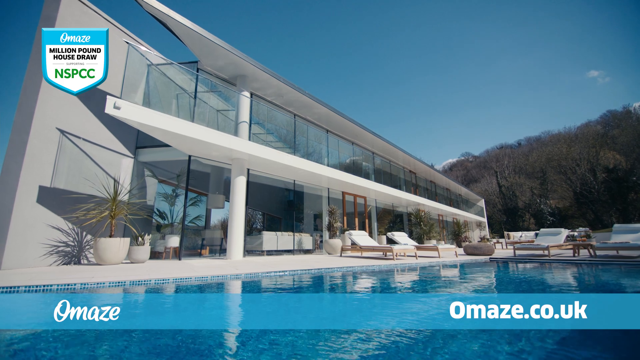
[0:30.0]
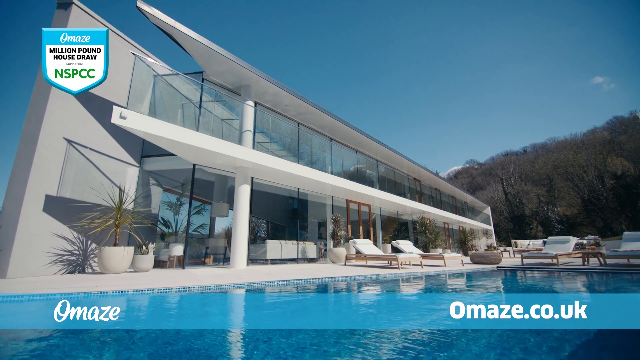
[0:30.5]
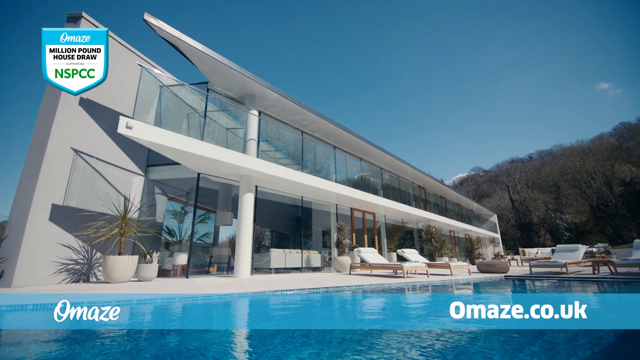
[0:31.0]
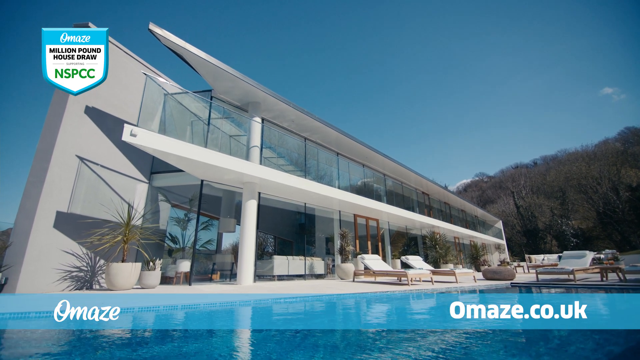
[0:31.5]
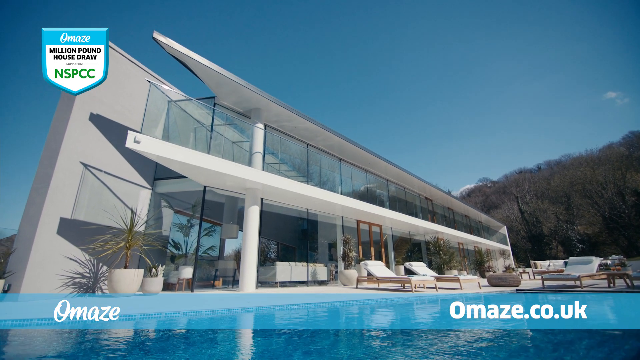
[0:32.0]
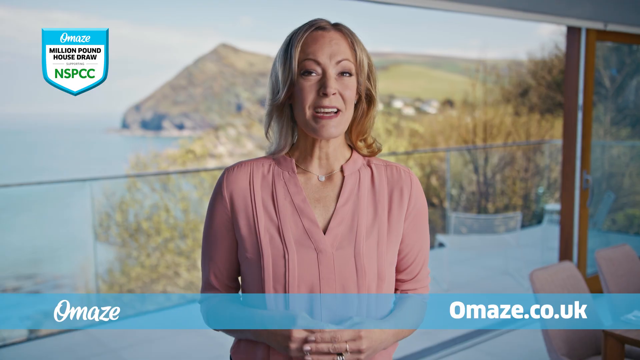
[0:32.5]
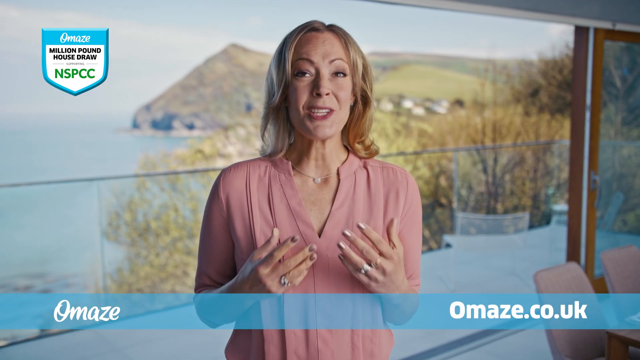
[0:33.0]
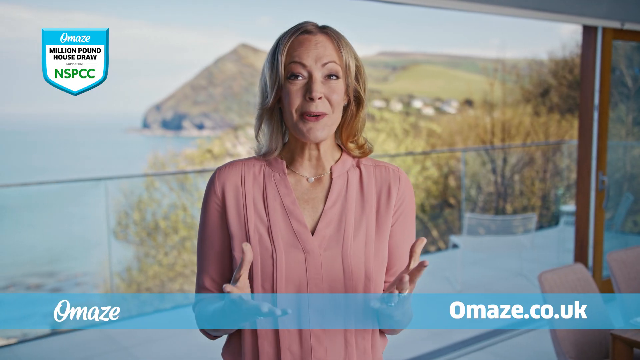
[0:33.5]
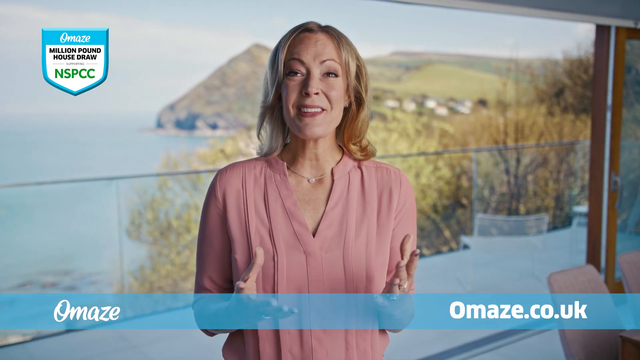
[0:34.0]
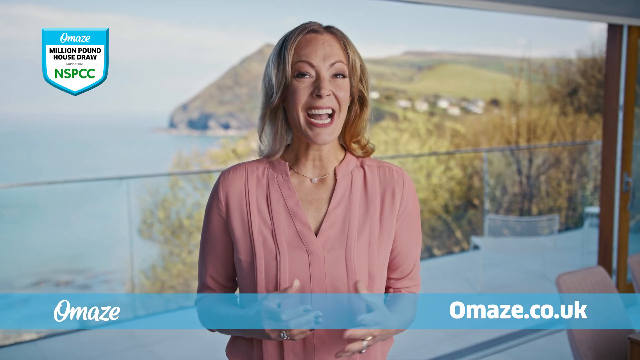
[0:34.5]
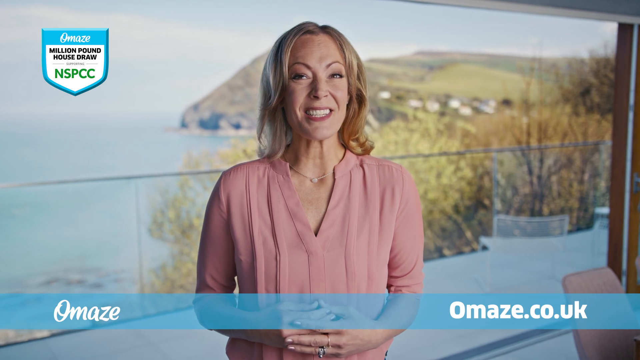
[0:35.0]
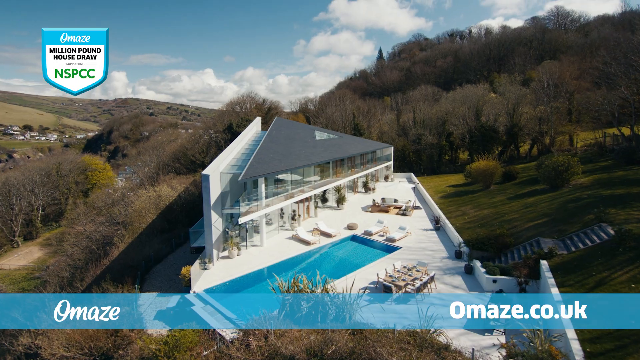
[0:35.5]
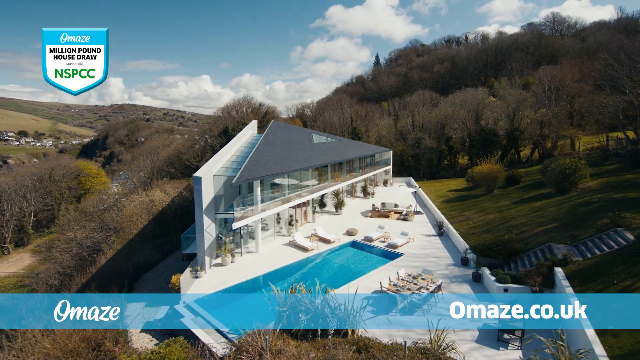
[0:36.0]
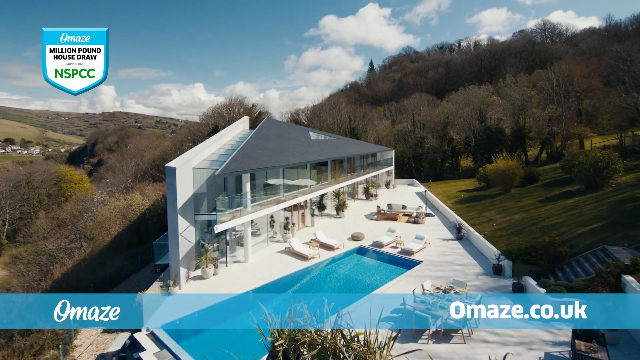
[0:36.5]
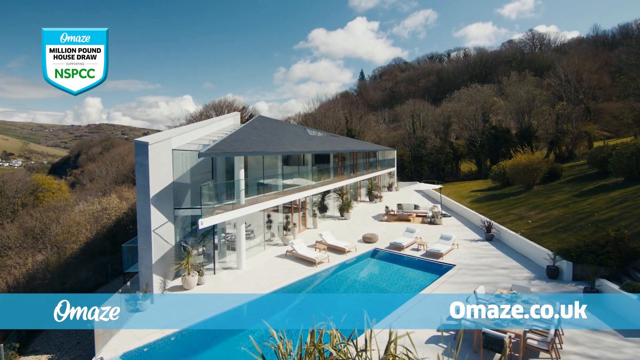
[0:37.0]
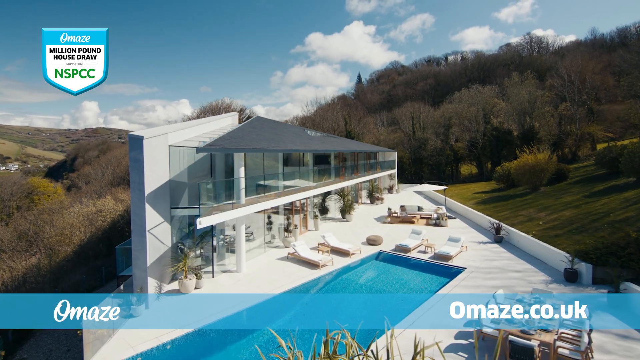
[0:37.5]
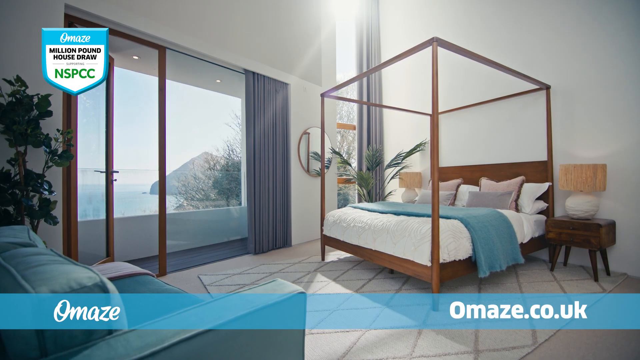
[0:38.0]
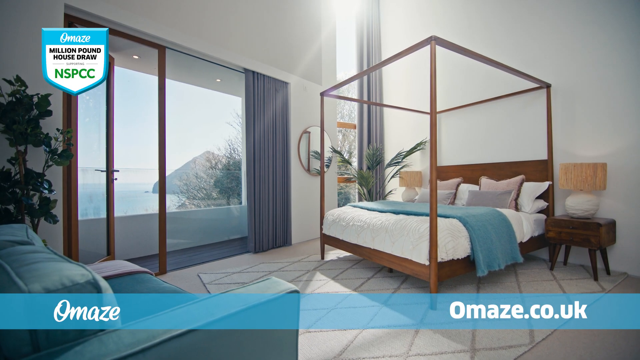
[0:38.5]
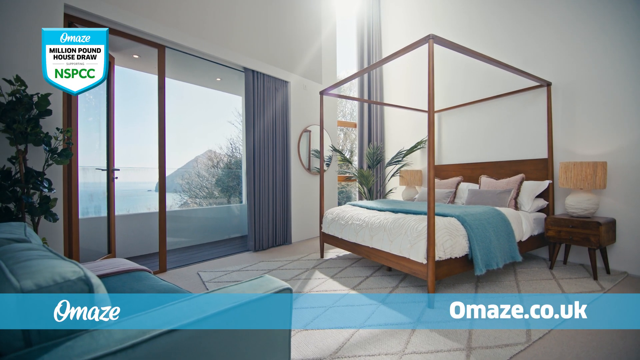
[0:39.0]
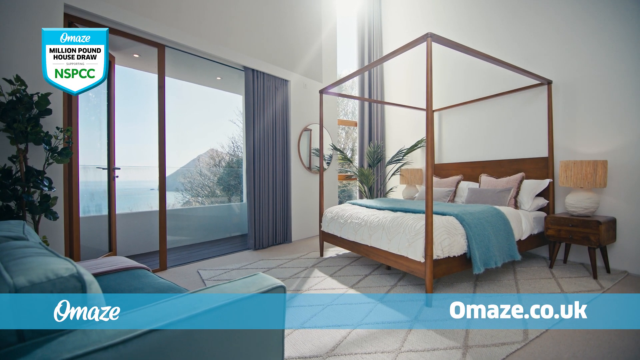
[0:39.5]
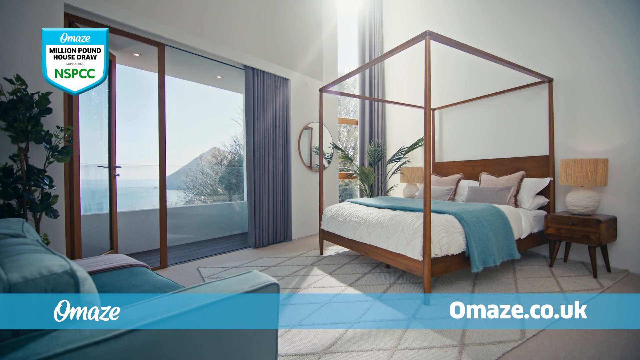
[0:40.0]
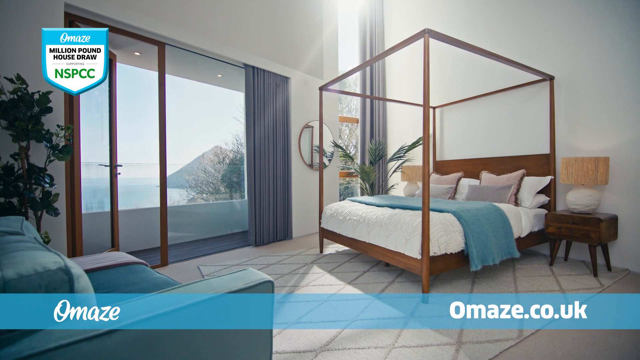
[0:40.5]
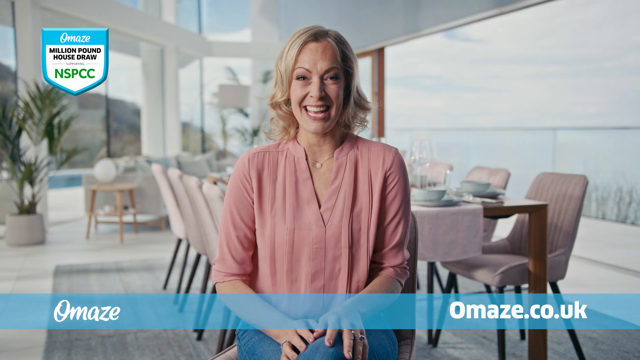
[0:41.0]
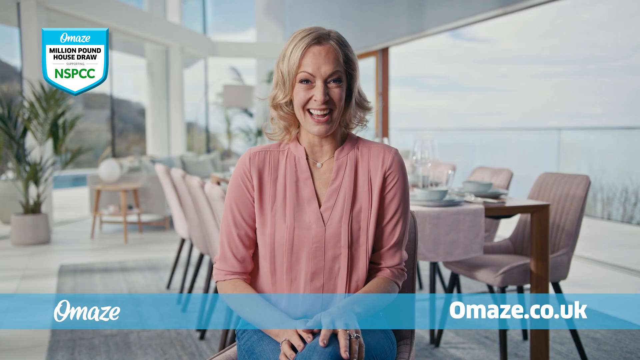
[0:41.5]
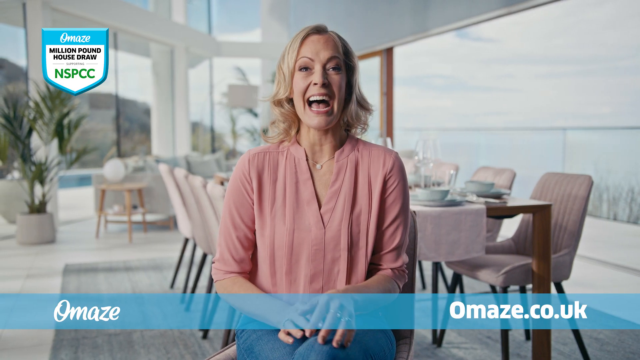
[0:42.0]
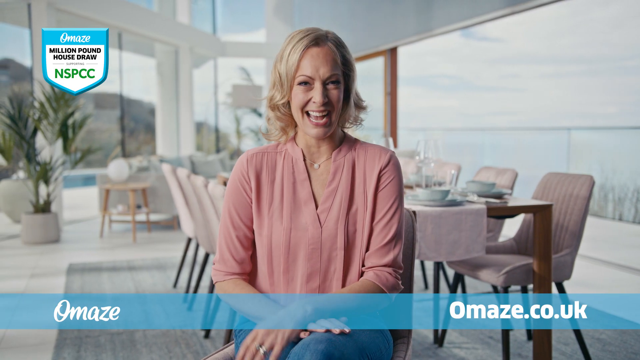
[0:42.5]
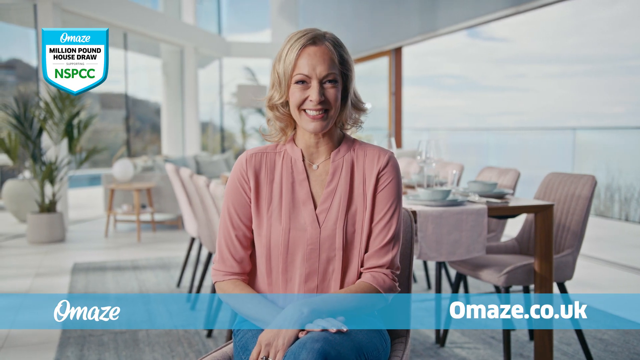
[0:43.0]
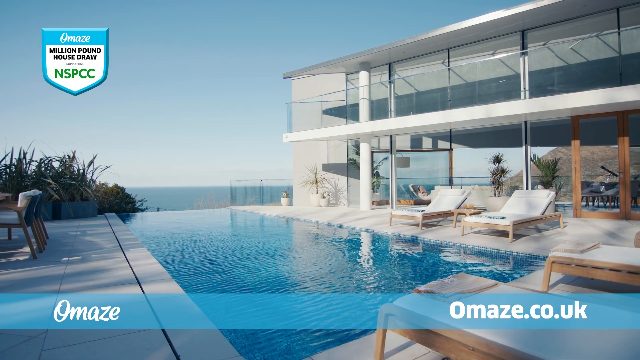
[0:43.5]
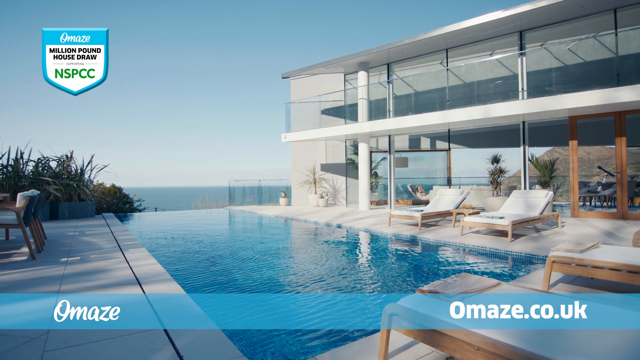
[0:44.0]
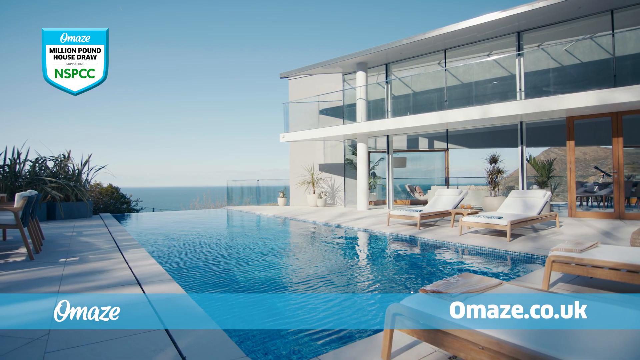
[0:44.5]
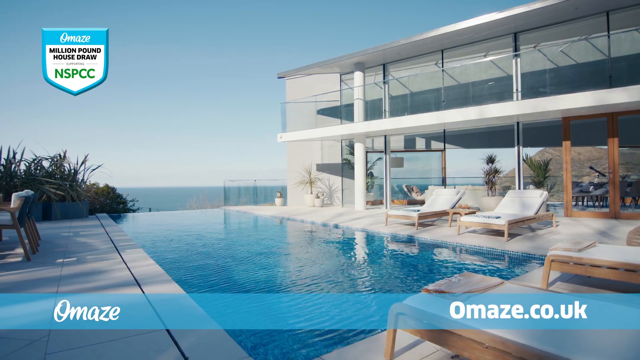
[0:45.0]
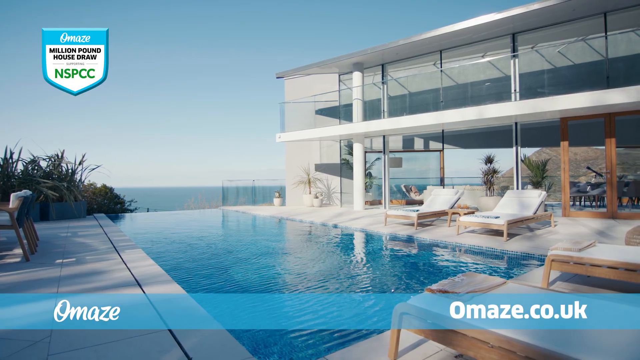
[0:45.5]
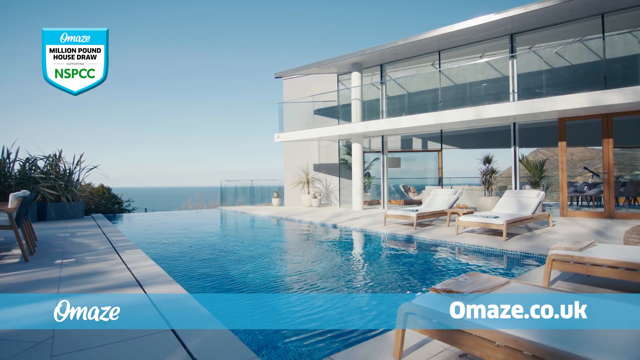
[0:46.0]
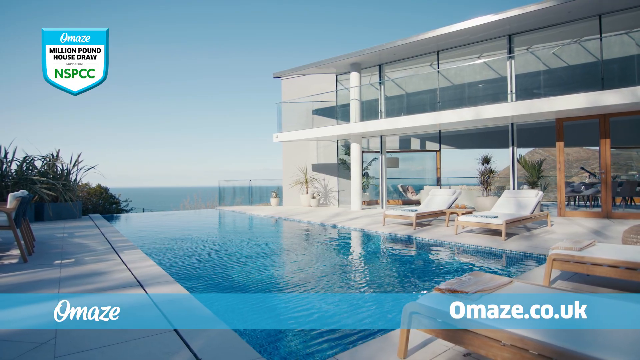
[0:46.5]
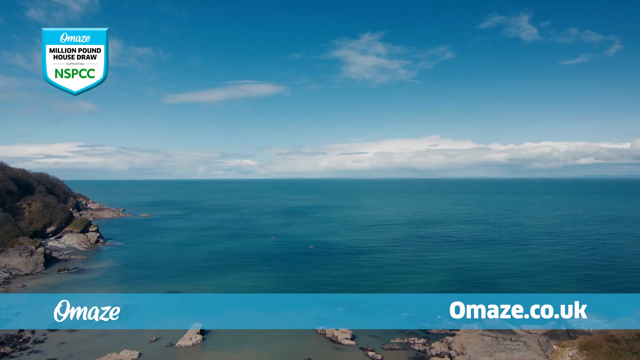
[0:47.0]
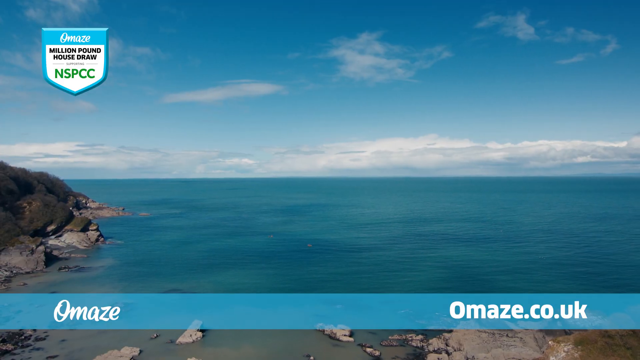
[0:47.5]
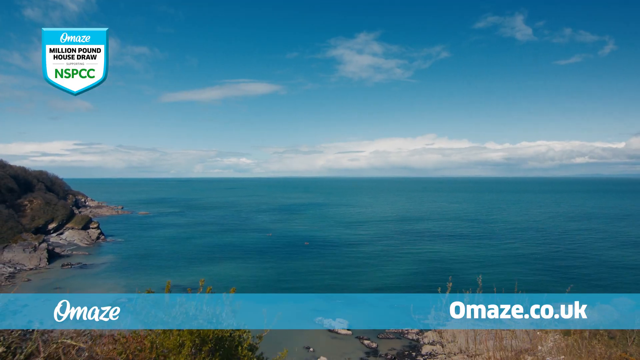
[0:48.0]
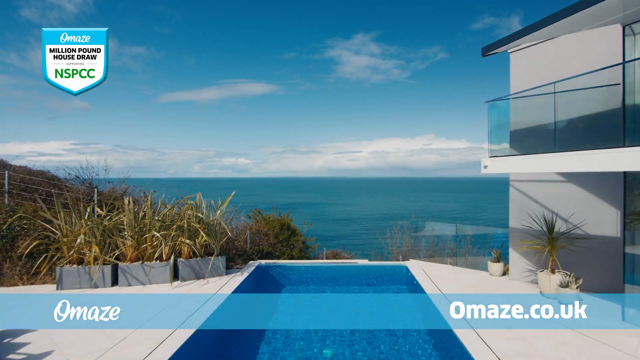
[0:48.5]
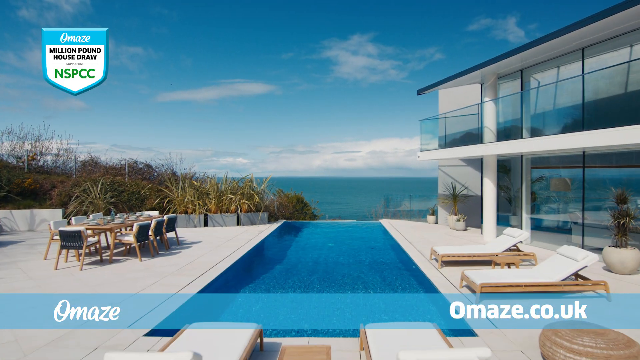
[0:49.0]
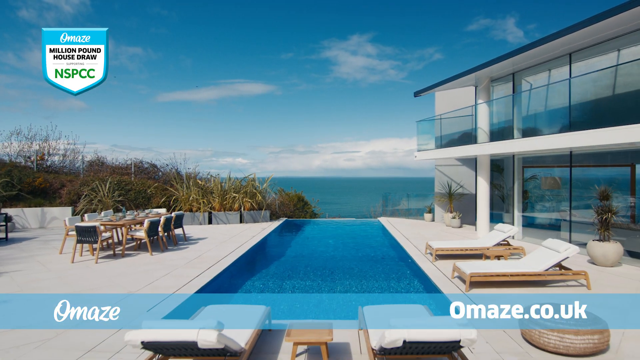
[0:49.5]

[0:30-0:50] A smiling woman with a light complexion and blonde, shoulder-length hair, who seems to be in her early 40s, talks about the resort. The view then moves into the interior of the resort, which is furnished and has a bed with an overlay throw. The text "million pound house draw" is shown with the NSPCC logo. Outside, the resort has a swimming pool and overlooks an ocean, surrounded by mountains and green trees. Text indicates it is for people over 18 only.